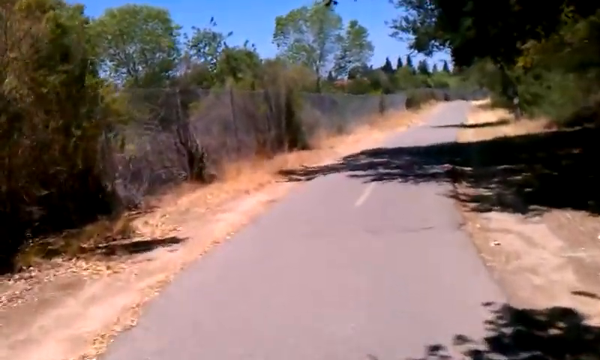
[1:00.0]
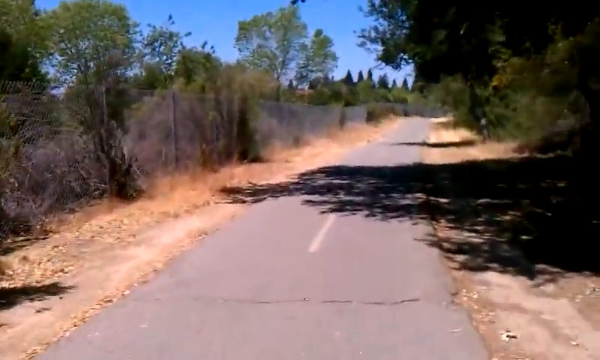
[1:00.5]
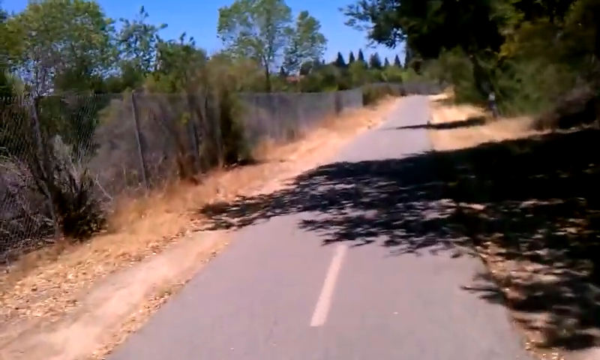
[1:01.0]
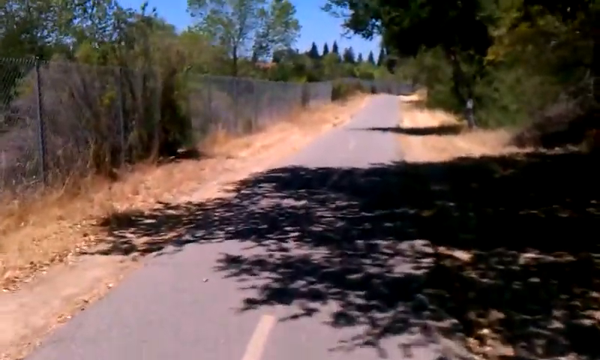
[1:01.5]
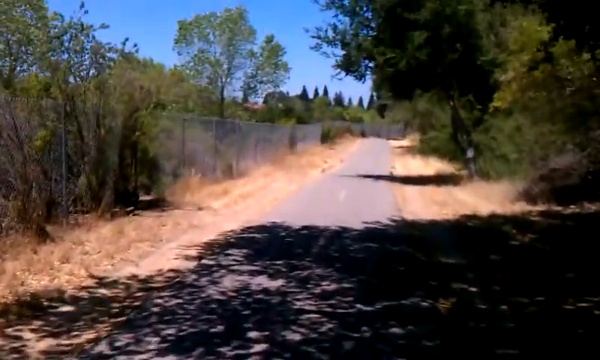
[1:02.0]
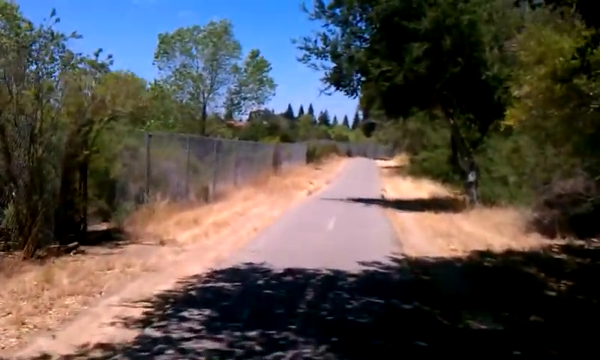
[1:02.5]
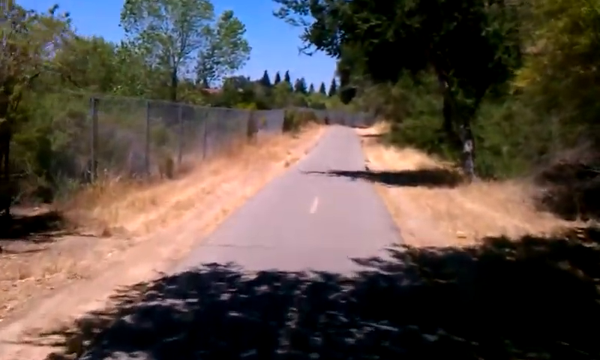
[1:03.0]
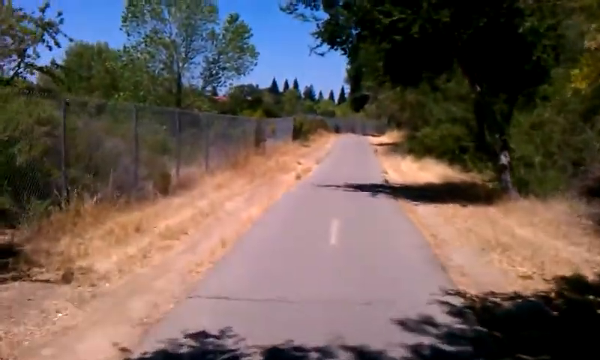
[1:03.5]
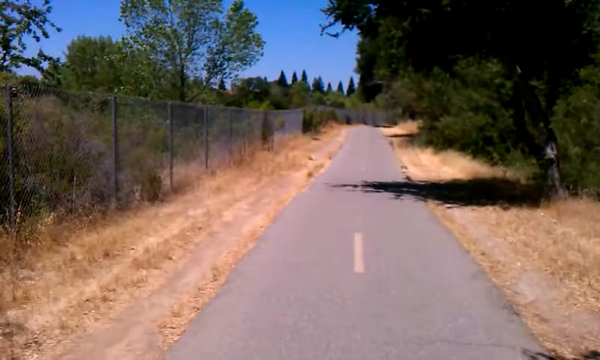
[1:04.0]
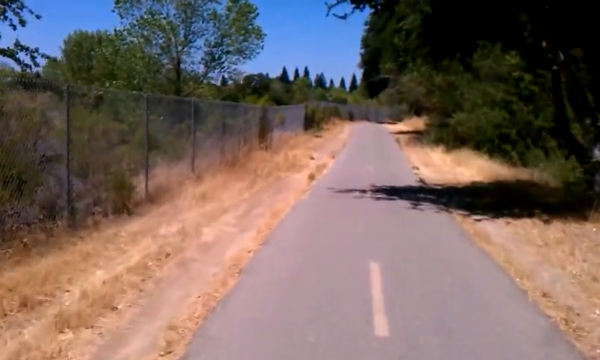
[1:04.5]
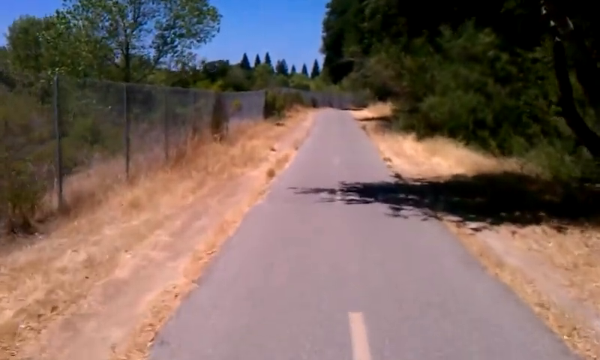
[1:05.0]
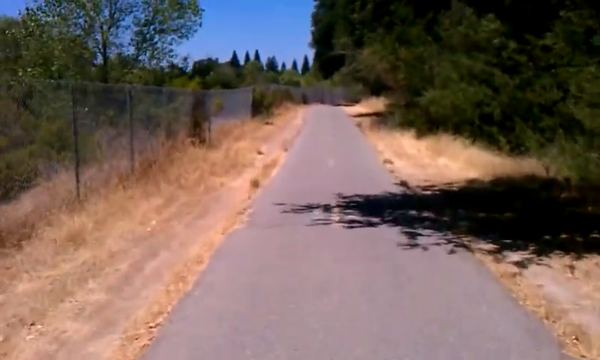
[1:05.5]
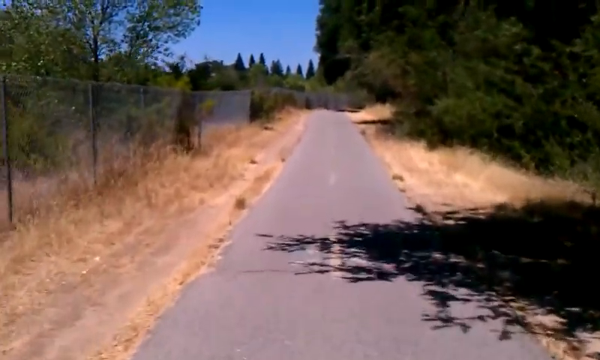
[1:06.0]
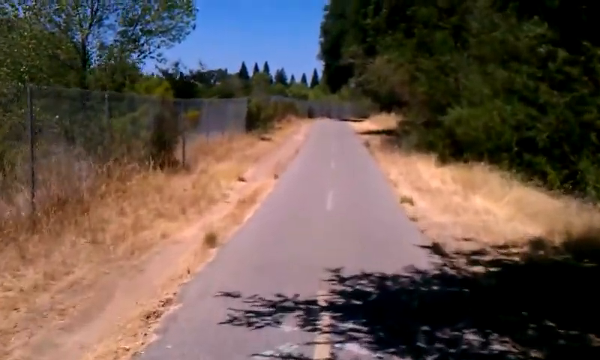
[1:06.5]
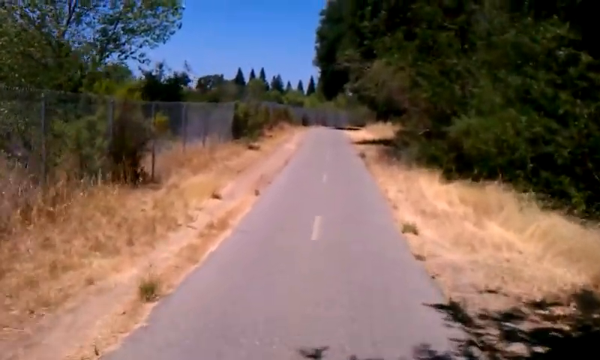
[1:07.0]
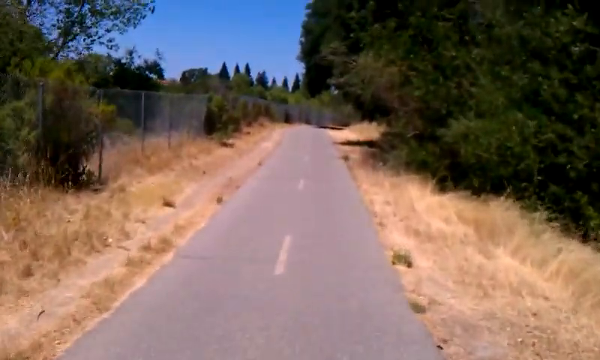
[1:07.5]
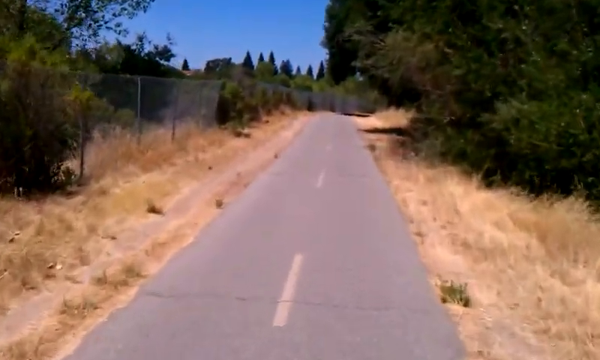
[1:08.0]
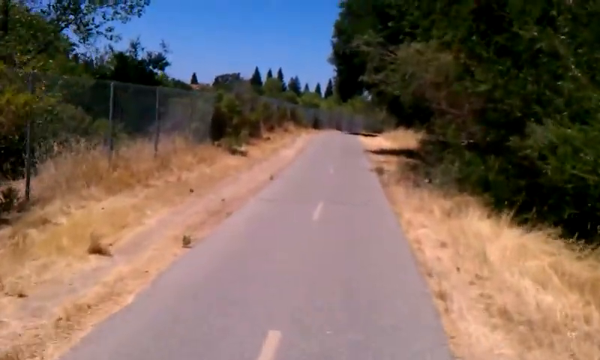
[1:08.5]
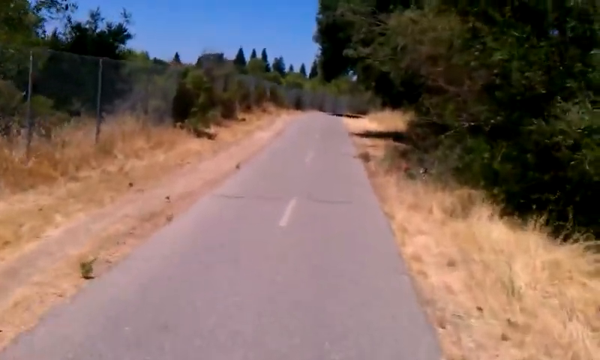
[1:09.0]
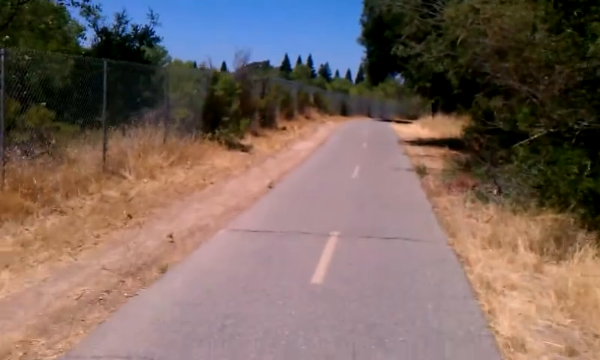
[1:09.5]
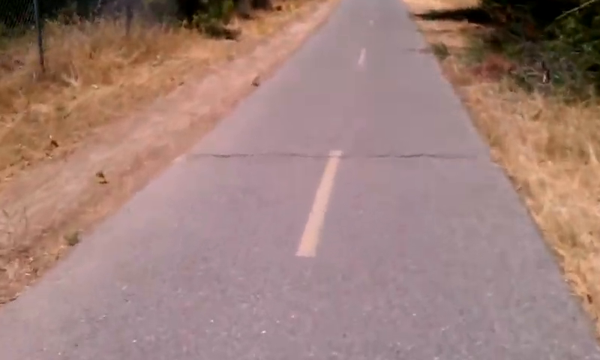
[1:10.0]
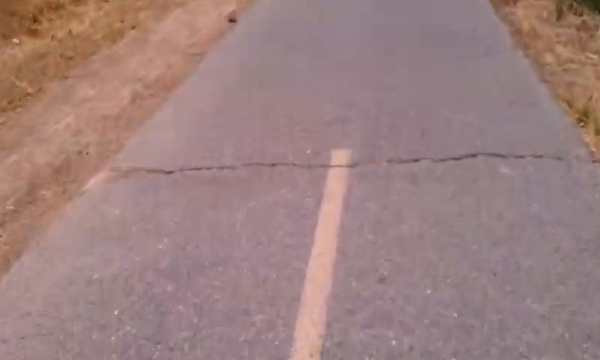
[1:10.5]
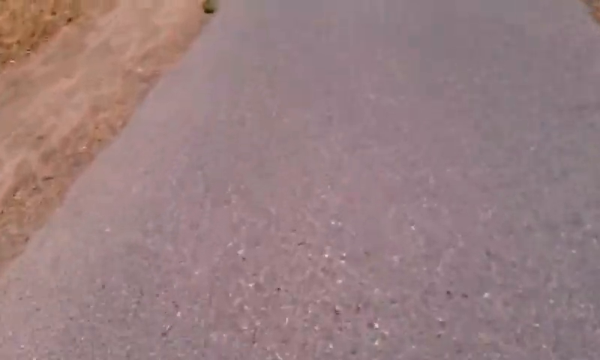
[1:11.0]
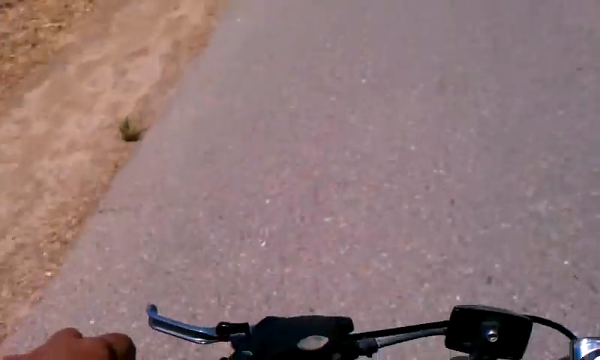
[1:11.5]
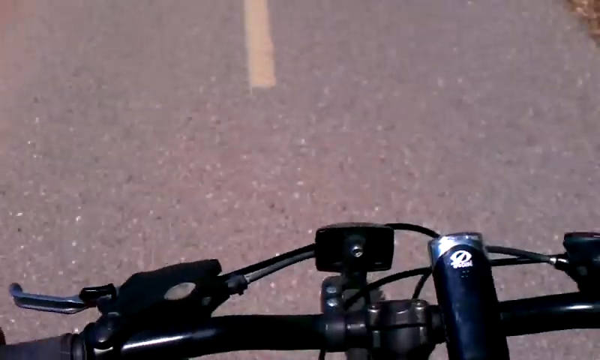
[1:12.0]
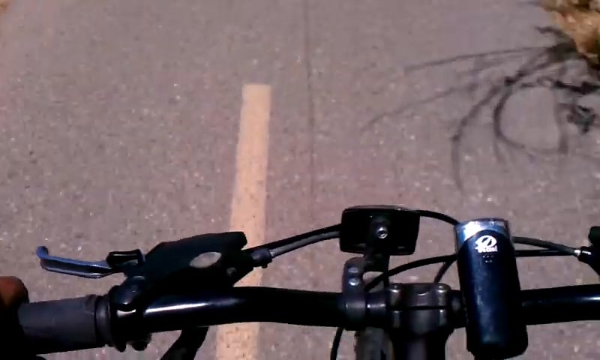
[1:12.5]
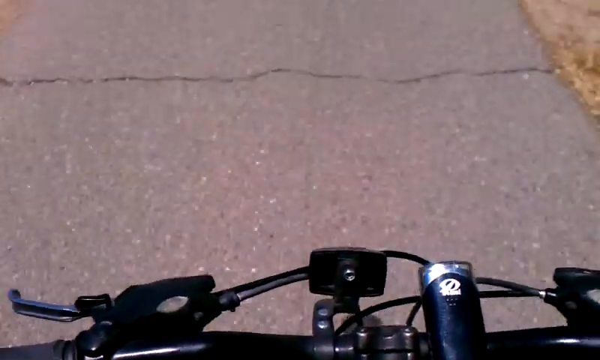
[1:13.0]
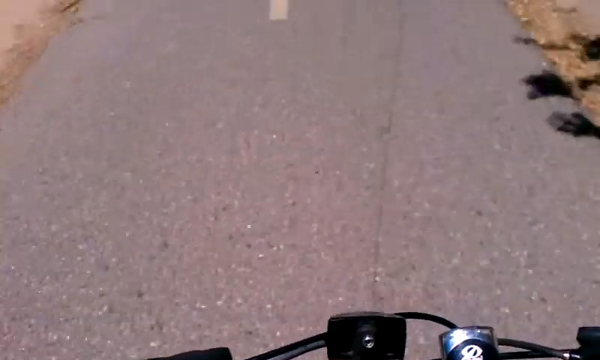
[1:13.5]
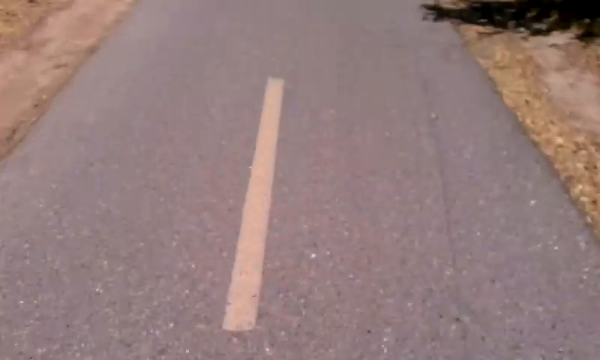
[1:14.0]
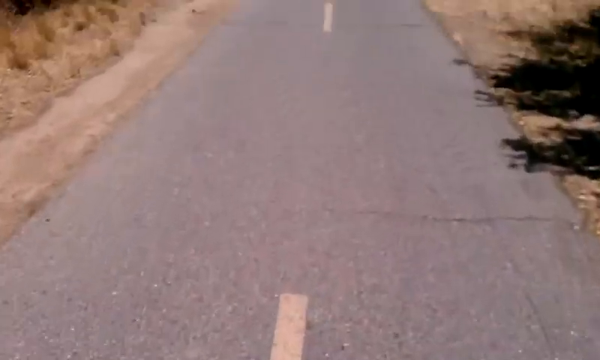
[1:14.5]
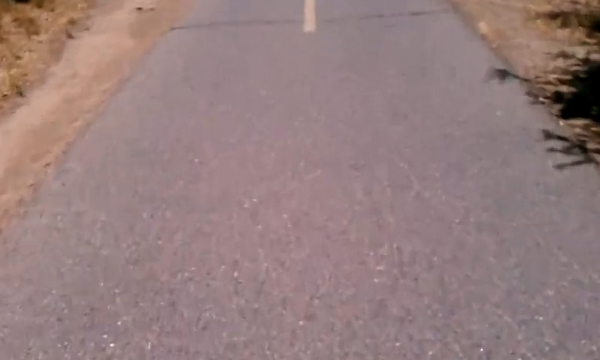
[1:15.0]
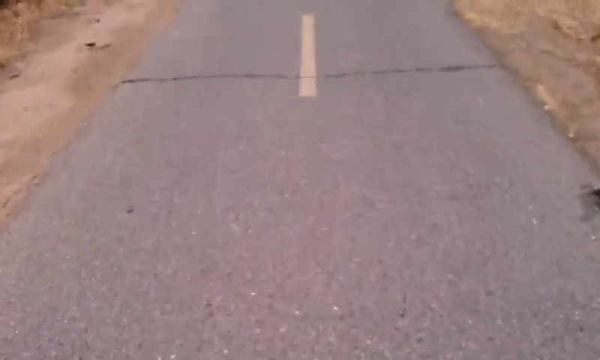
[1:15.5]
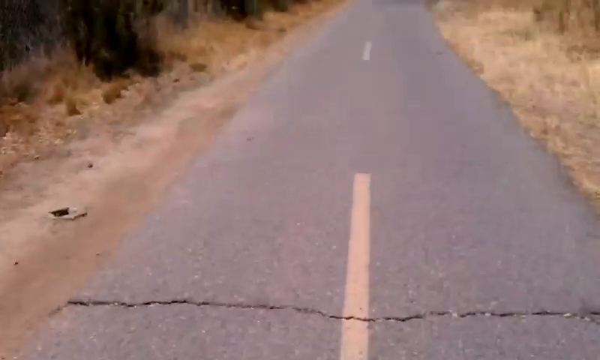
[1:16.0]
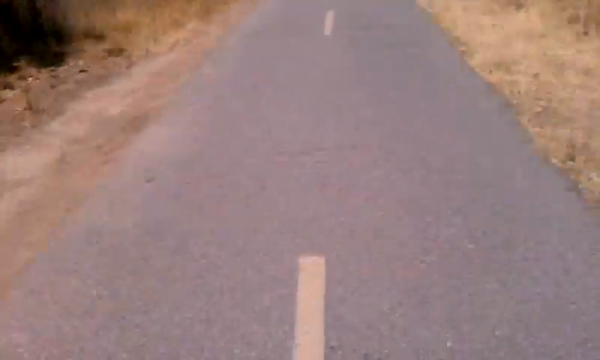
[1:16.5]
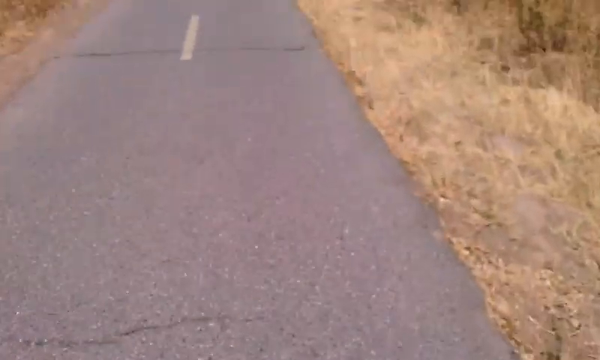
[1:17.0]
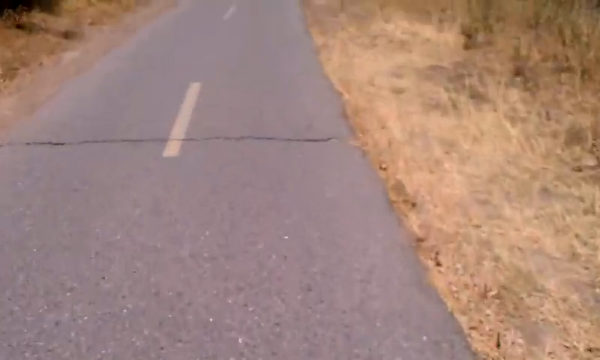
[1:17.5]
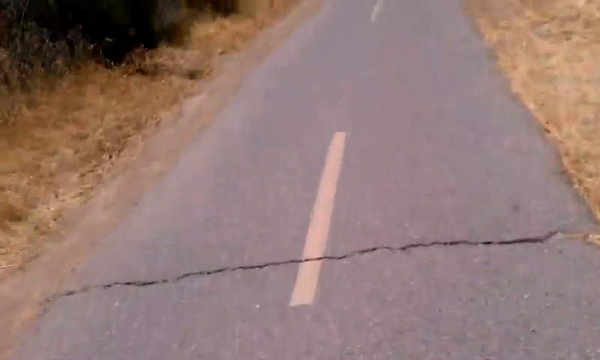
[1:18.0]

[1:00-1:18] A cyclist rides down a grey road path with white lines down the middle. On the left side is a greyish chain-link fence with green trees behind it and blue sky above on the left. More green trees are on the right, some casting shadow over the pathway. Dry brown vegetation or dirt lines either side of the path, and more green trees are on the right and left. The grey pathway has cracks, and the black handlebar of the bicycle is visible along with more cracks in the road. Sunlight is visible, and it looks like a very hot day.